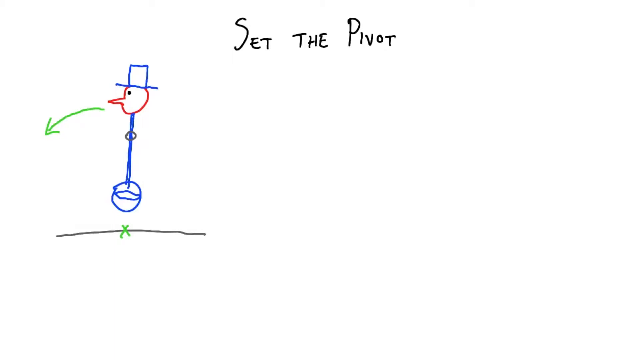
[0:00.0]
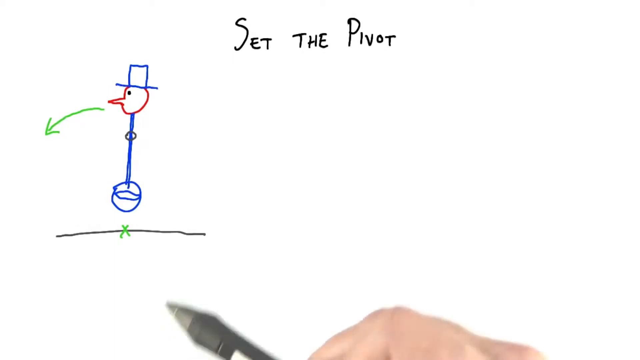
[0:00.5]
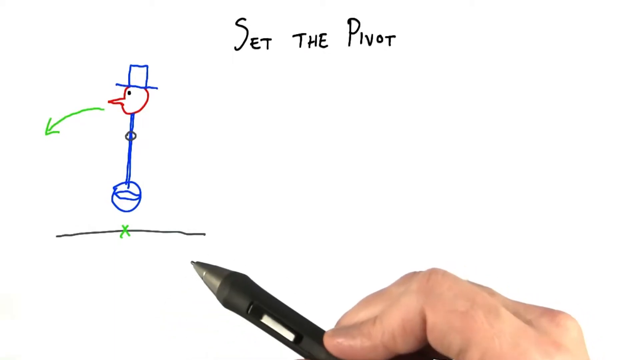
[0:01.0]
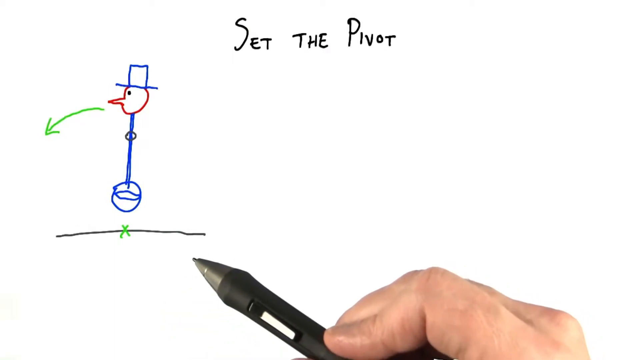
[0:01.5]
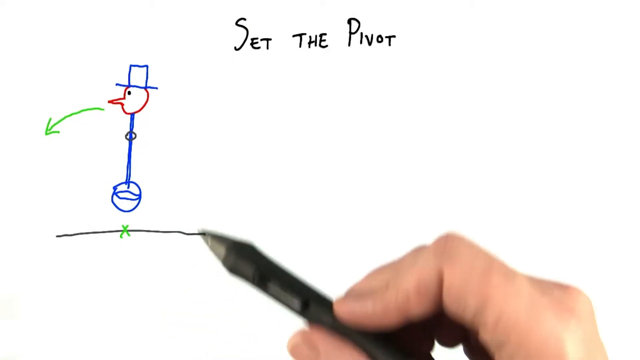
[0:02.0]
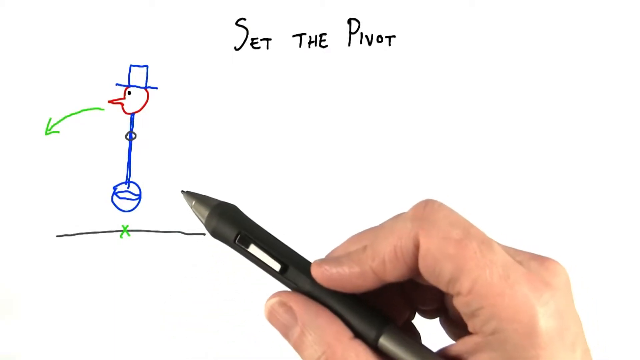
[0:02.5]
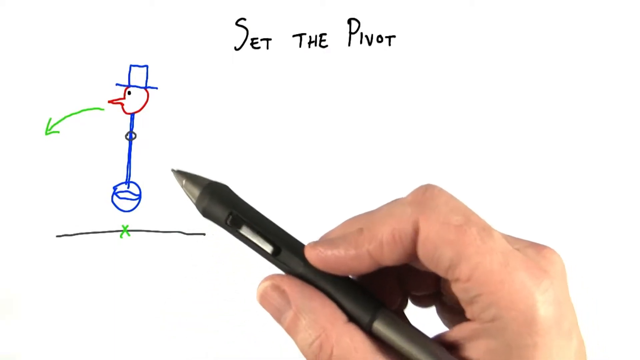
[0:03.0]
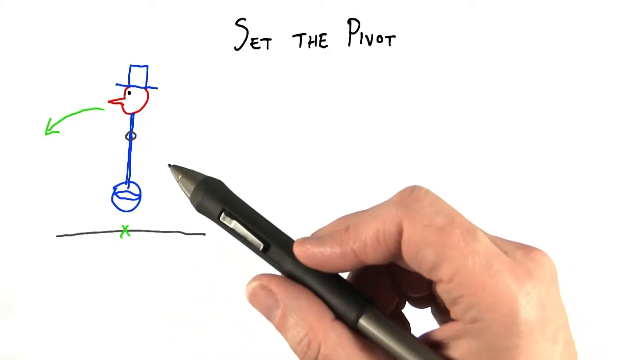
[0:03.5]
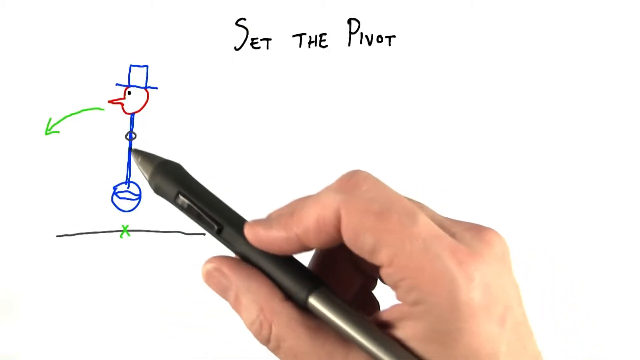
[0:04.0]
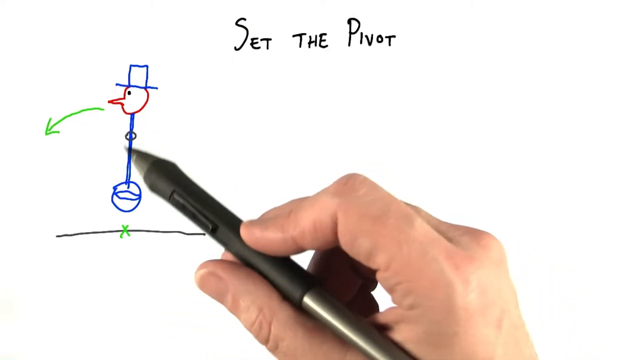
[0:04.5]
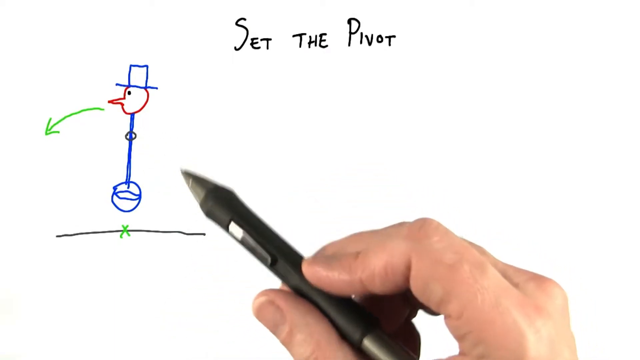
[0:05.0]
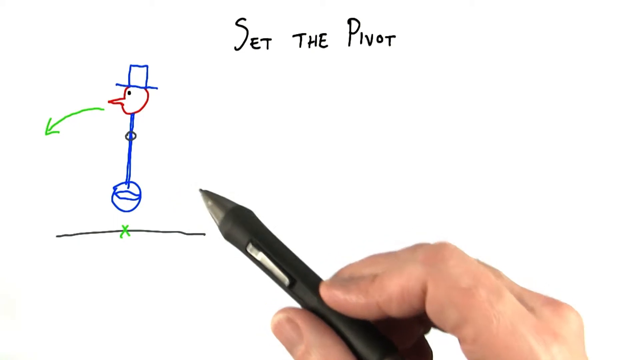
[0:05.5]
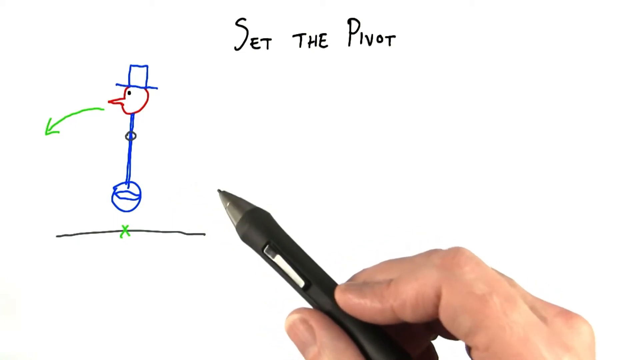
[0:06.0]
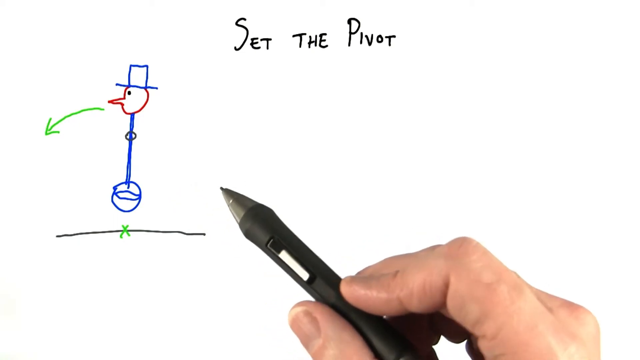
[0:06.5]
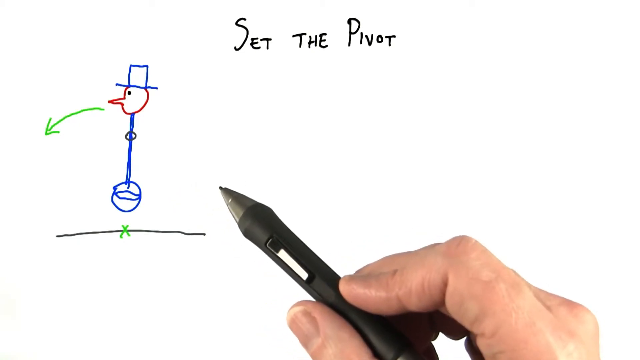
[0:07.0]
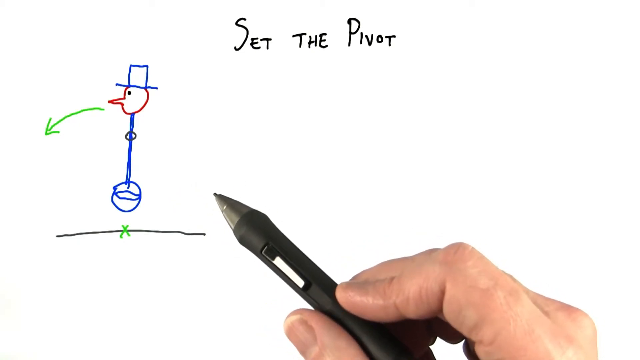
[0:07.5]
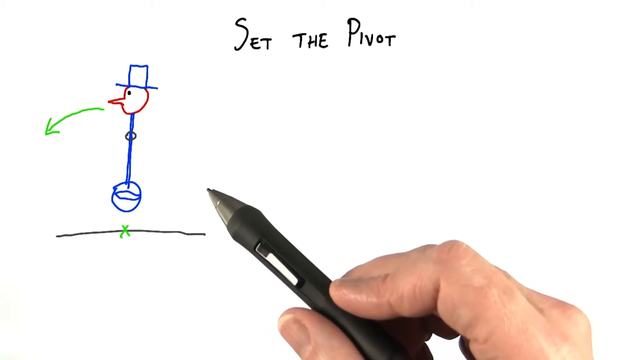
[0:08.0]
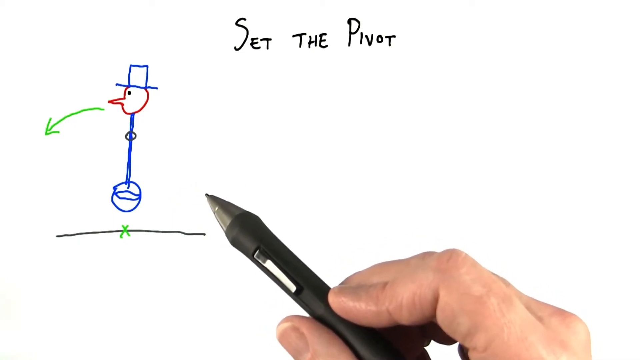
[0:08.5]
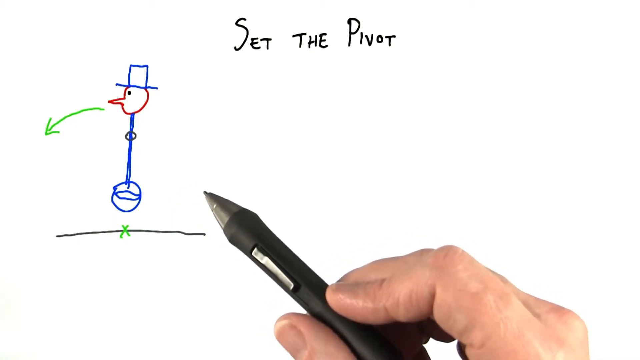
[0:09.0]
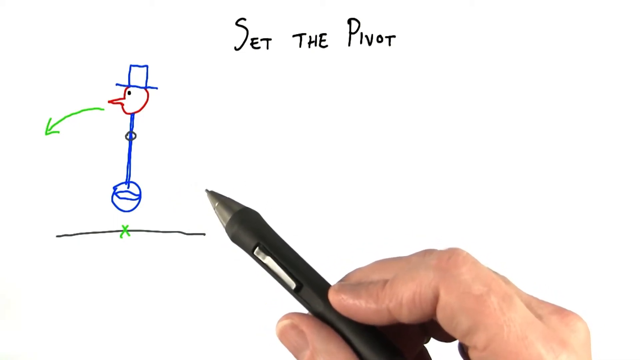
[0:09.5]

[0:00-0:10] This is a tutorial on how to set the pivot. "Set the pivot" is written at the top of the screen, and there is a drawing of a stickman on the left side of the screen. The stickman wears a hat, and a green arrow points down from its face, indicating a downward movement. On the right side of the screen are the user's fingers holding a black pen, which he uses to point at various points on the body of the stickman he has drawn.